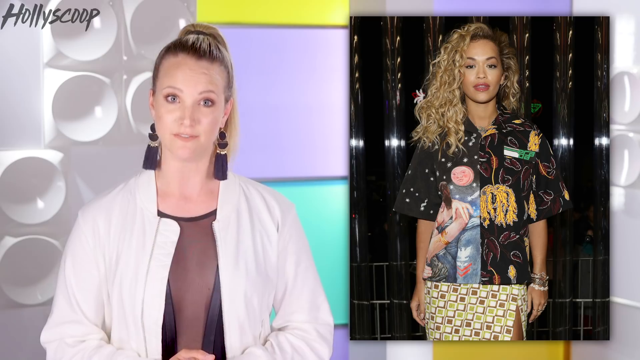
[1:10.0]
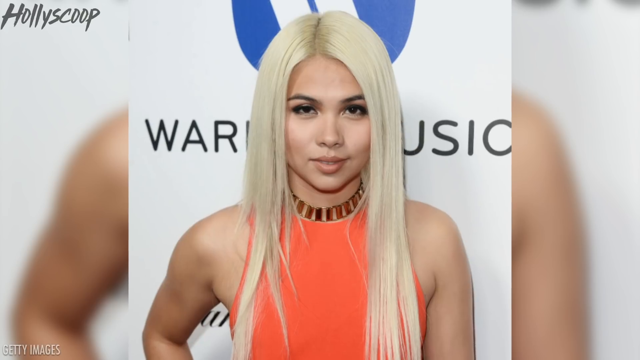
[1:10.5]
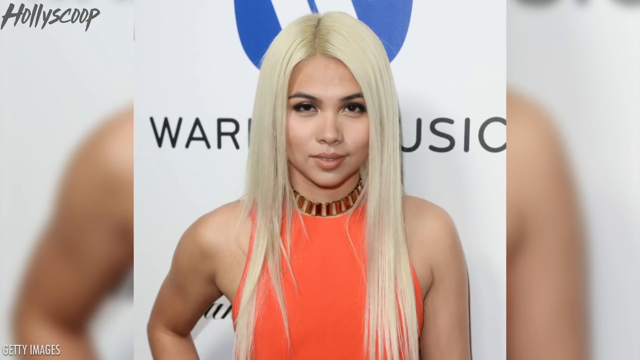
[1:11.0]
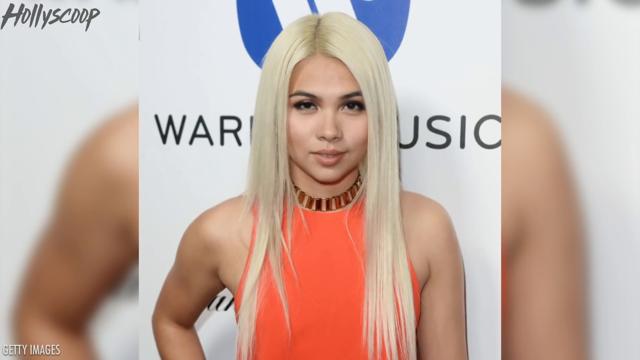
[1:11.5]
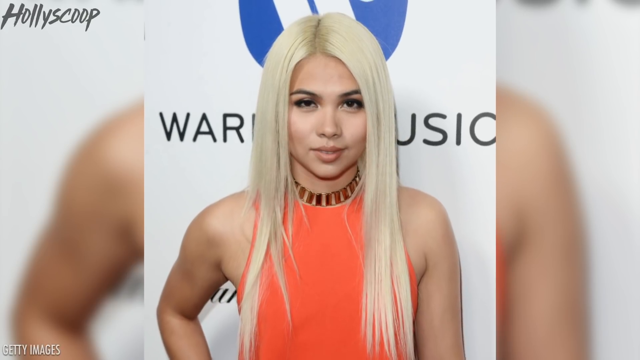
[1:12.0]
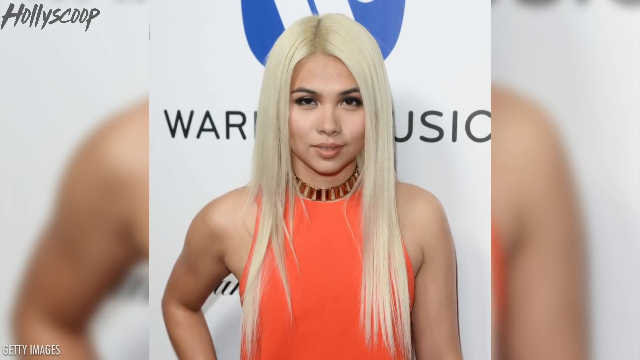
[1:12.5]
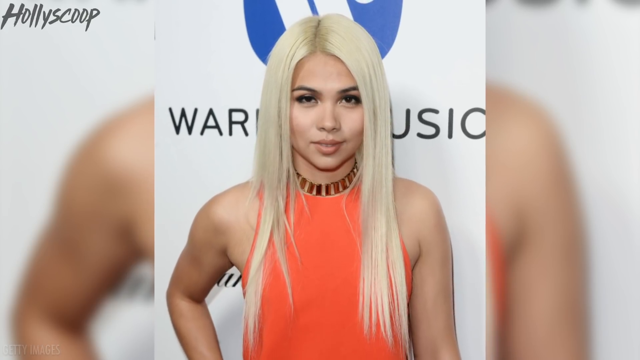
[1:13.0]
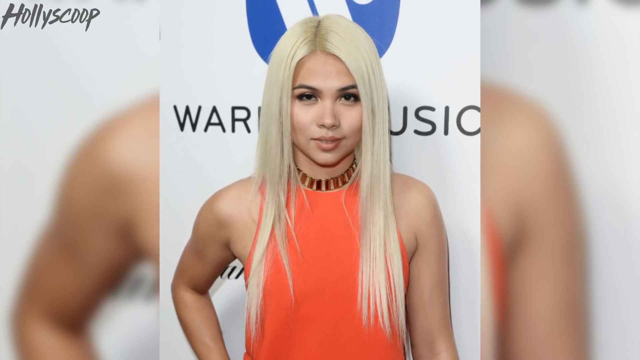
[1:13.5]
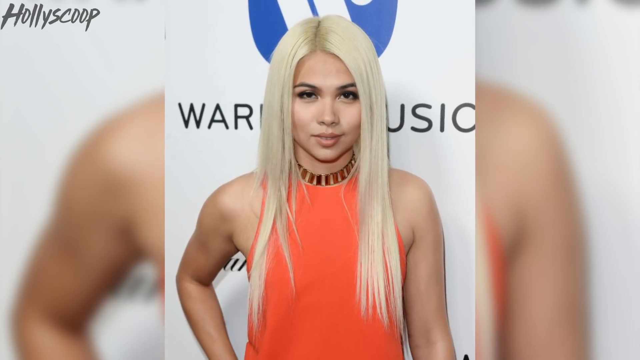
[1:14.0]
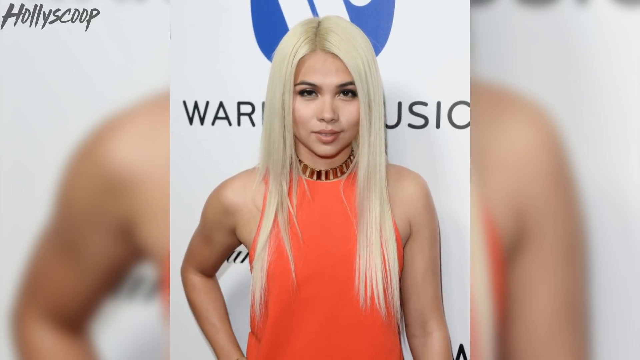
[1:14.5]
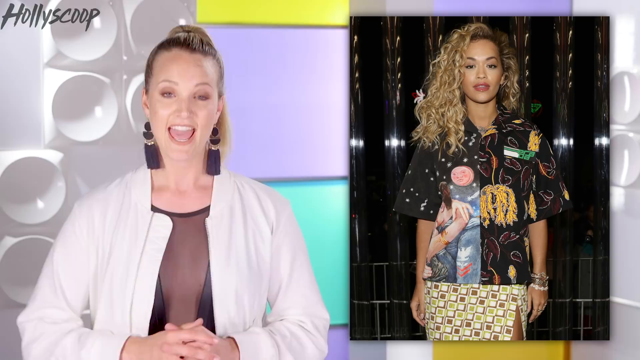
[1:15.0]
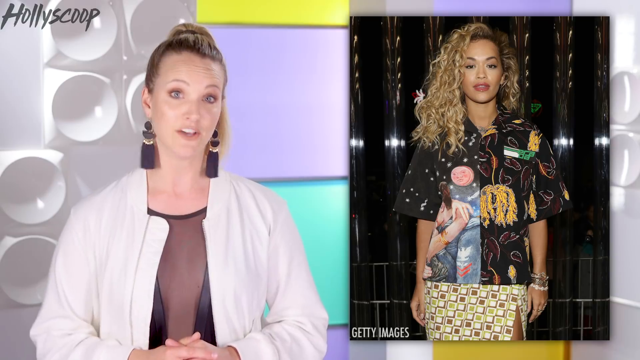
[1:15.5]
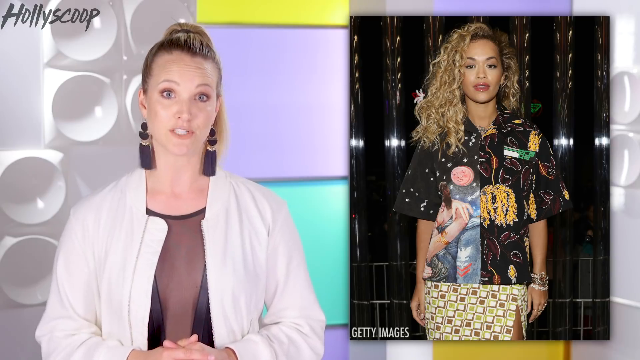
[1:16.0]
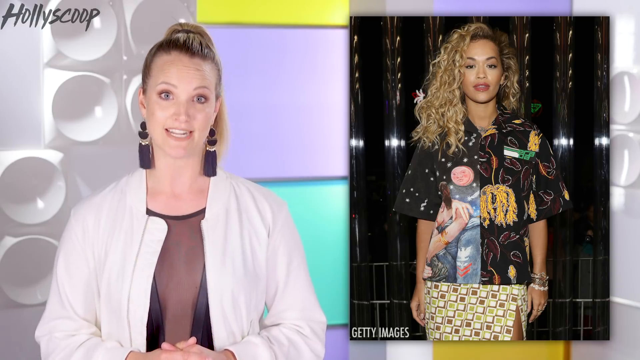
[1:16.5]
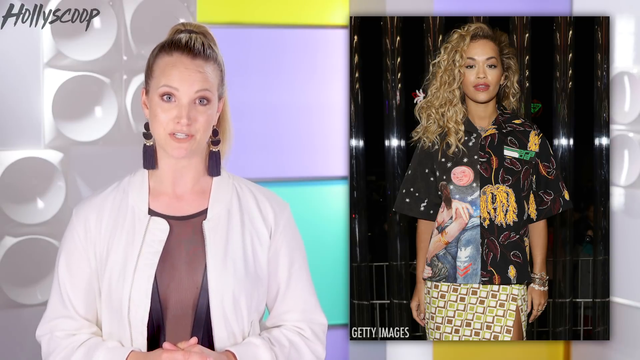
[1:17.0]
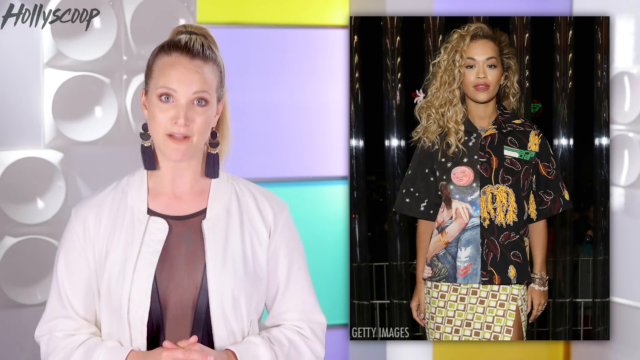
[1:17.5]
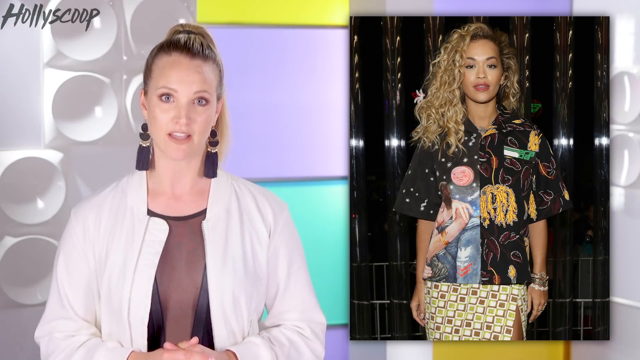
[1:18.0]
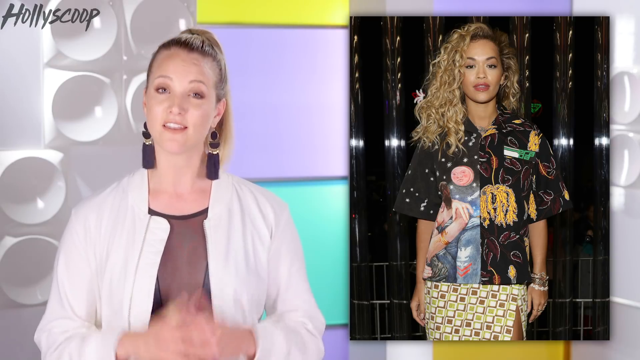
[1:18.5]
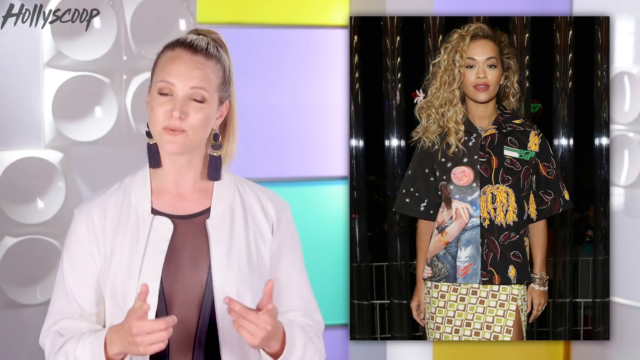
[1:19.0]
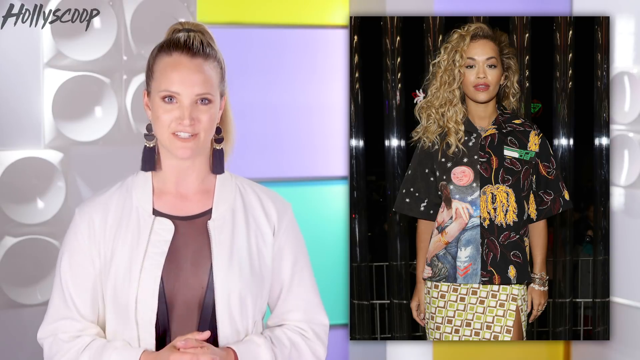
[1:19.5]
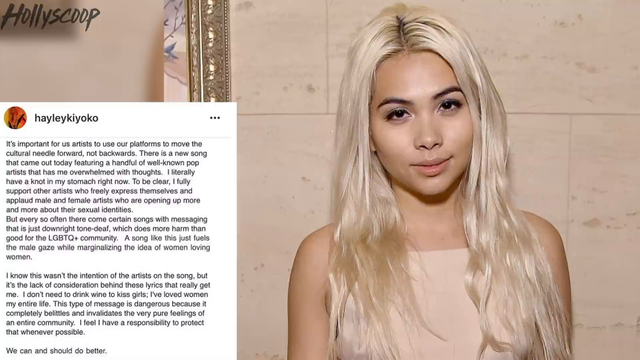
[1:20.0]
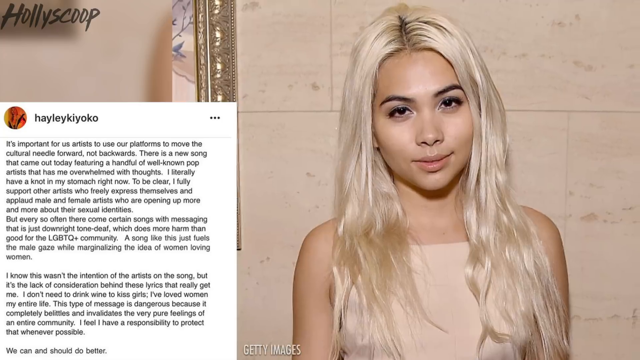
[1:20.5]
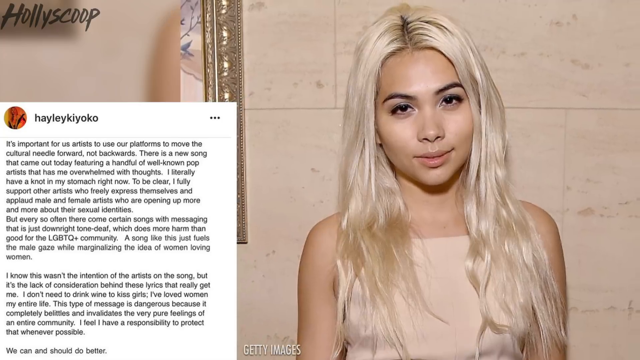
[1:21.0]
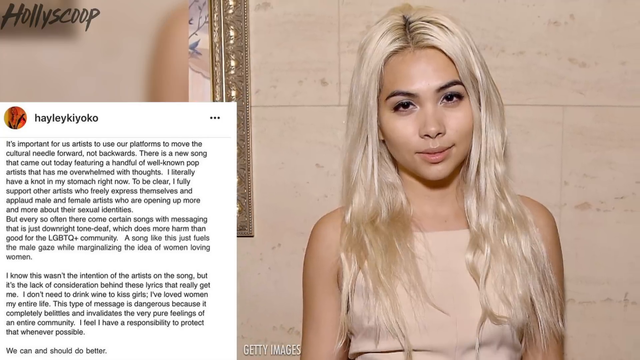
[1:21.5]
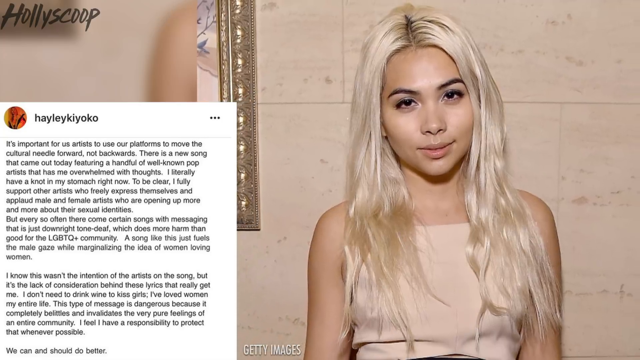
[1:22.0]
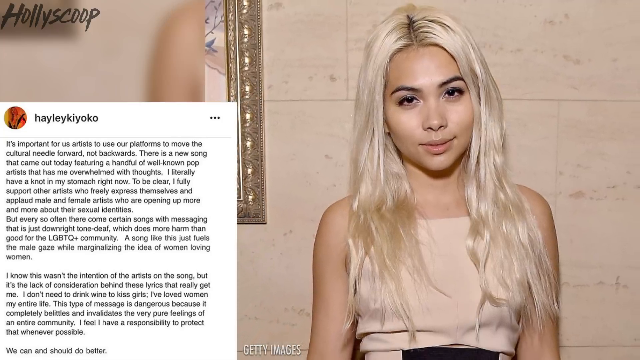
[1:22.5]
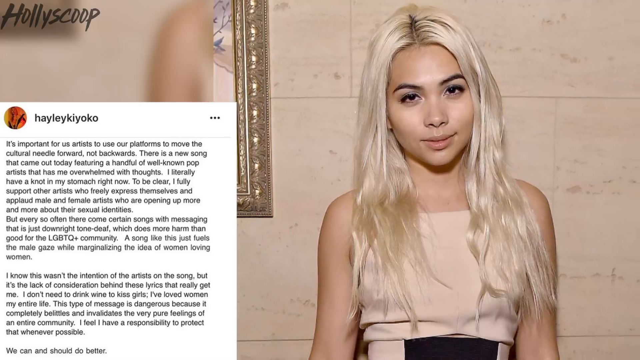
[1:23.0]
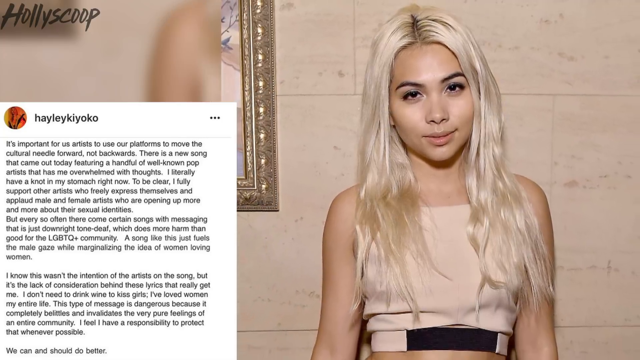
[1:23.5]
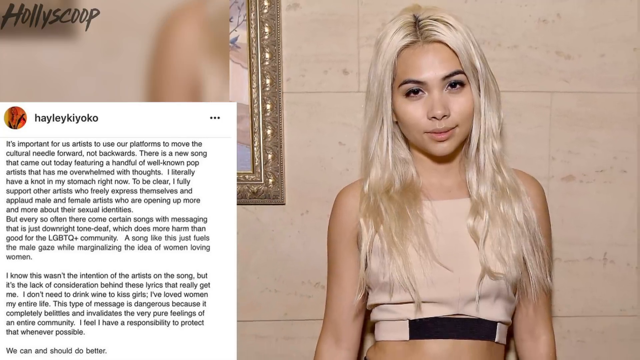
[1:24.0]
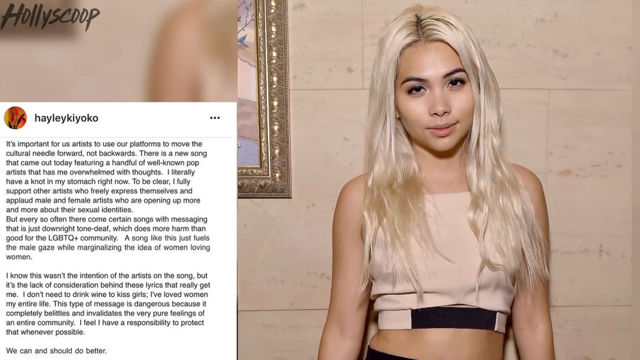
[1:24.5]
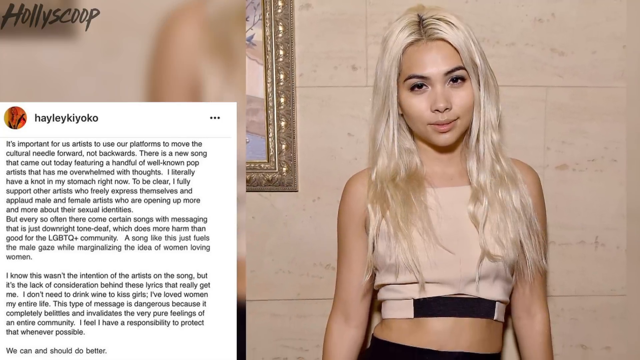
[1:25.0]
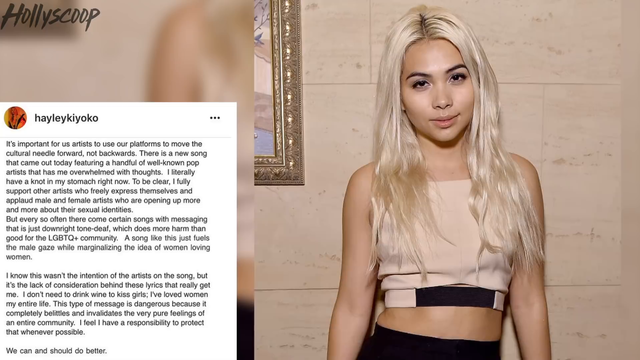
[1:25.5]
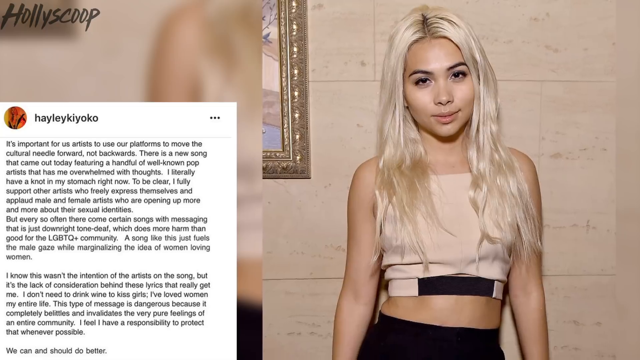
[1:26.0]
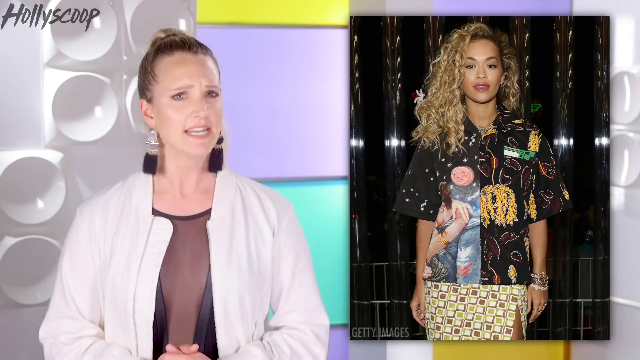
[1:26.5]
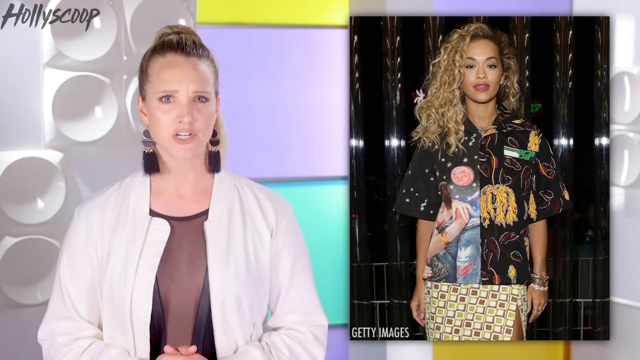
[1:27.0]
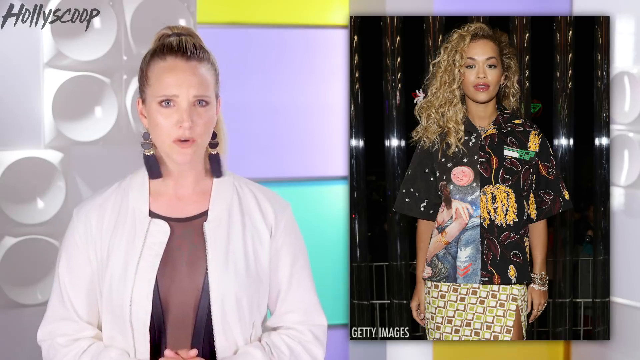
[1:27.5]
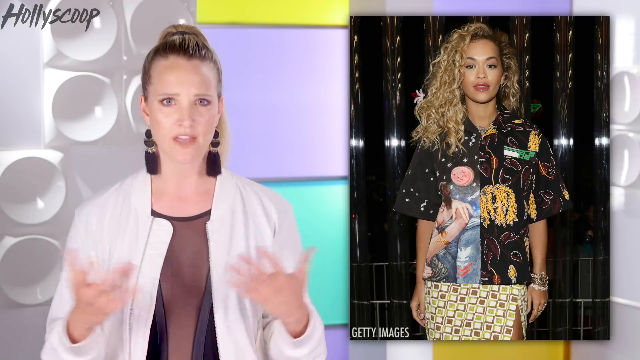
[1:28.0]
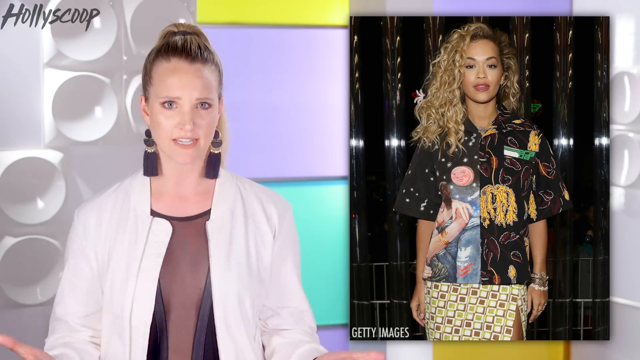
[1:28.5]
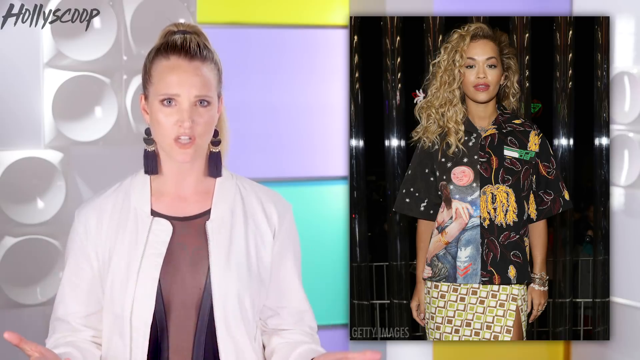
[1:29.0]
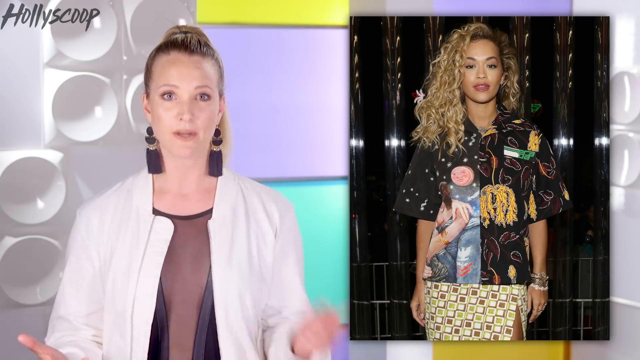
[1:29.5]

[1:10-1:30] The blonde host talks with the picture of Rita Ora on the right, before a quick cut to another celebrity with very long, straight blonde hair, wearing an orange top cut off at the sleeves. The image zooms out before cutting back to the host, who briefly holds both hands out as if making a compromise. The video then shows this celebrity on the right side, her blonde hair a bit wavier and wearing what appears to be a tan dress. On the left side is what looks like an Instagram post identifying her as Hayley Kiyoko. The post reads: "It's important for us artists to use our platforms to move the cultural needle forward, not backwards. There is a new song that came out today featuring a handful of well-known pop artists that has me overwhelmed with thoughts. I literally have a knot in my stomach right now. To be clear, I fully support other artists who freely express themselves, and applaud male and female artists who are opening up more and more about their sexual identities. But every so often there comes certain songs with messaging that is downright tone deaf, which does more harm than good for the LGBTQ+ community. A song like this just fuels the male gaze while marginalizing the idea of women loving women. I know this wasn't the intention of the artist of the song, but it's the lack of consideration behind these lyrics that really get me. I don't need to drink wine to kiss girls, I've loved women my entire life." It continues: "I feel like I have a responsibility to protect that wherever possible." The image of Hayley zooms out and quickly cuts back to the host, who looks very upset and gestures with her hands.